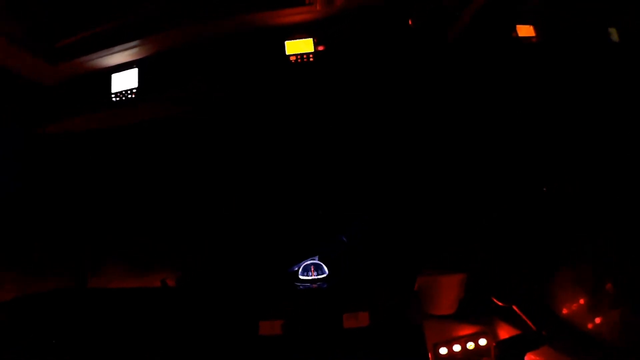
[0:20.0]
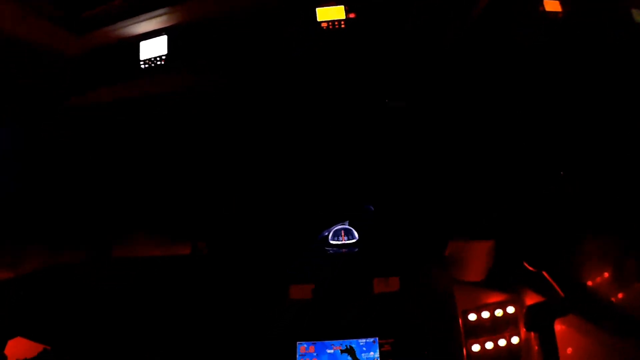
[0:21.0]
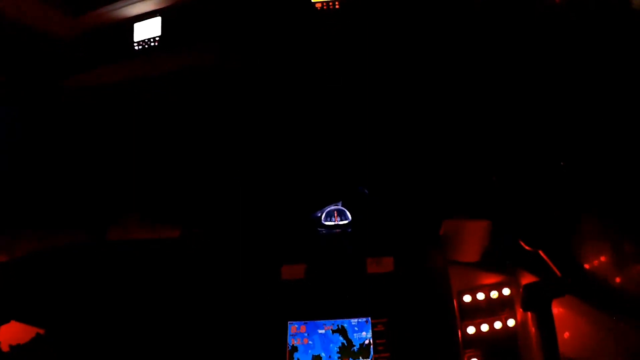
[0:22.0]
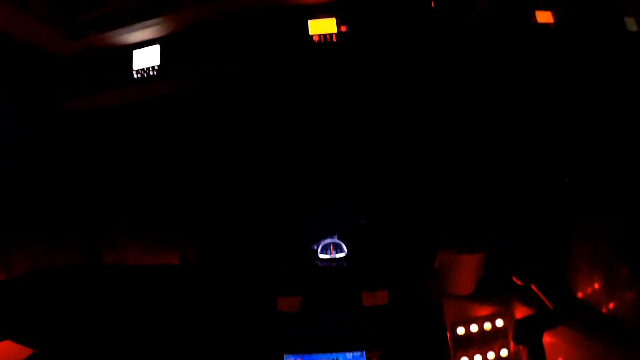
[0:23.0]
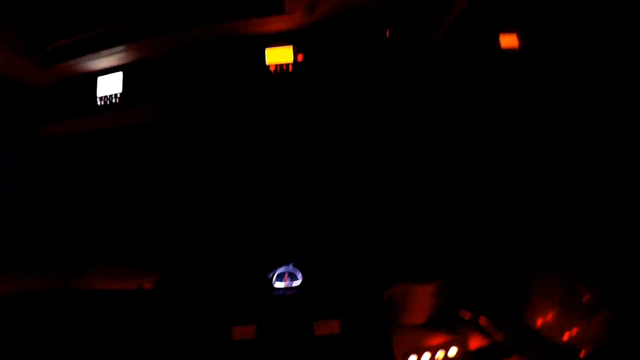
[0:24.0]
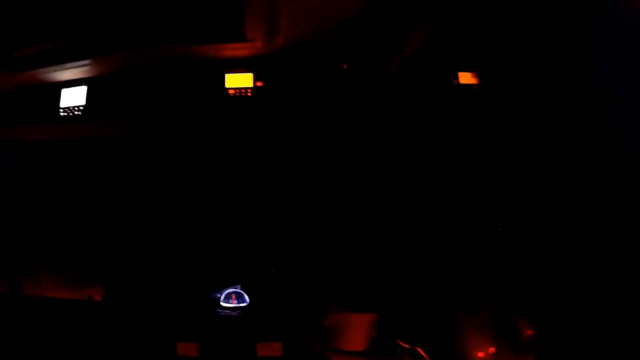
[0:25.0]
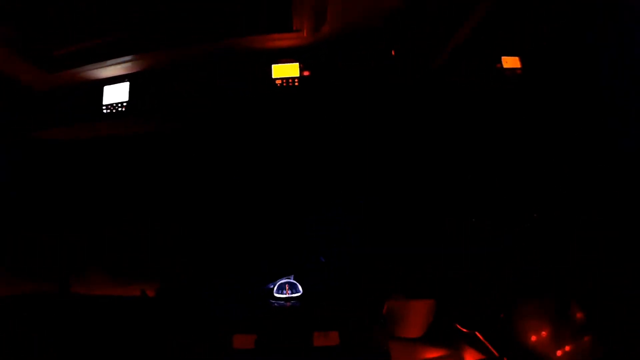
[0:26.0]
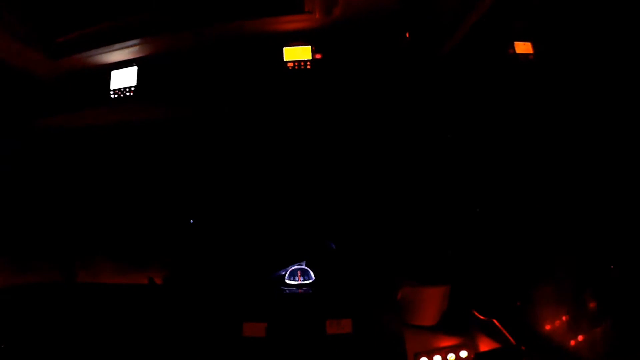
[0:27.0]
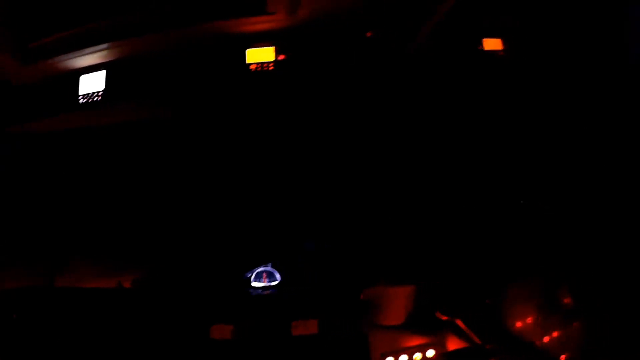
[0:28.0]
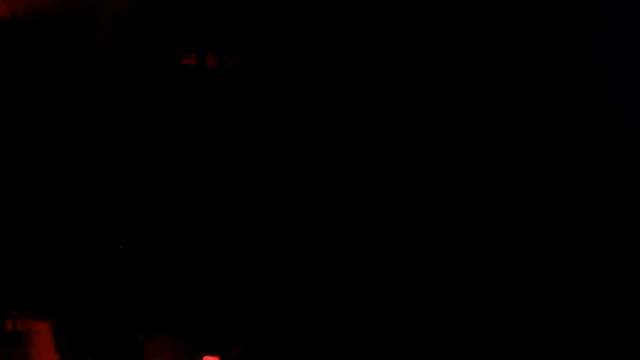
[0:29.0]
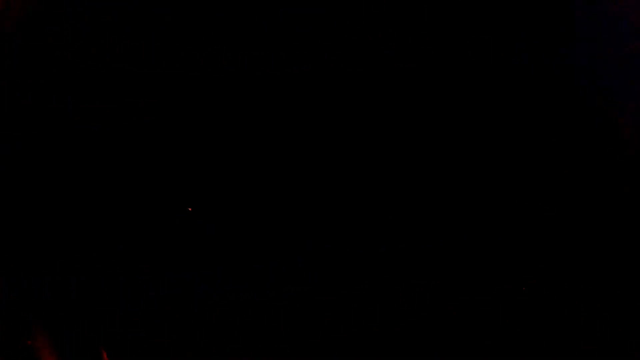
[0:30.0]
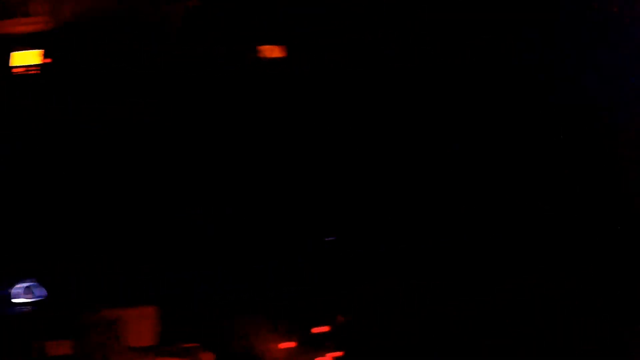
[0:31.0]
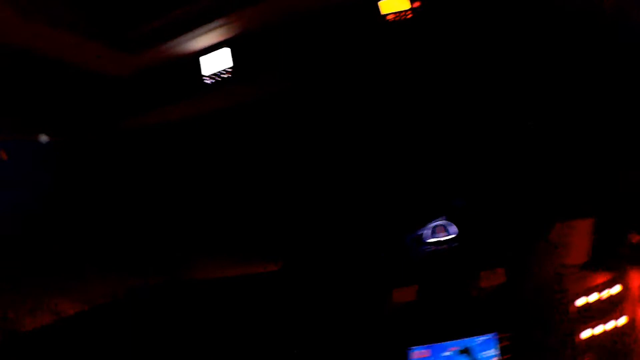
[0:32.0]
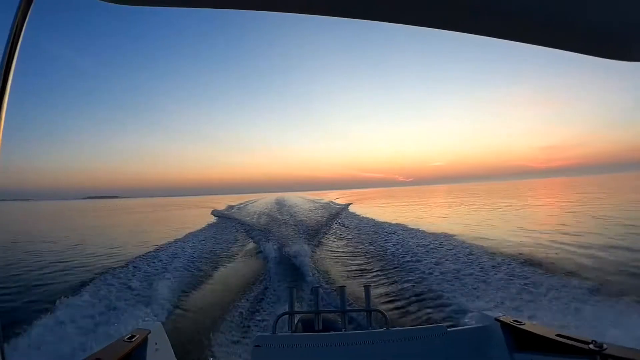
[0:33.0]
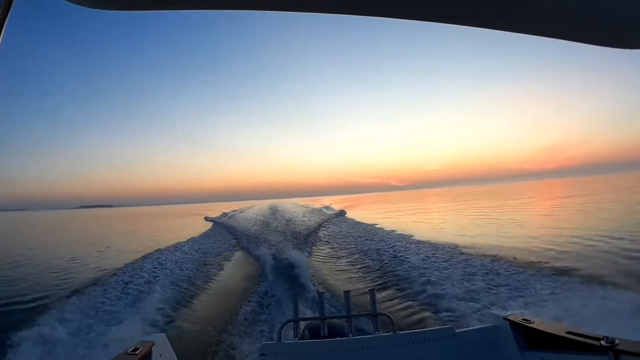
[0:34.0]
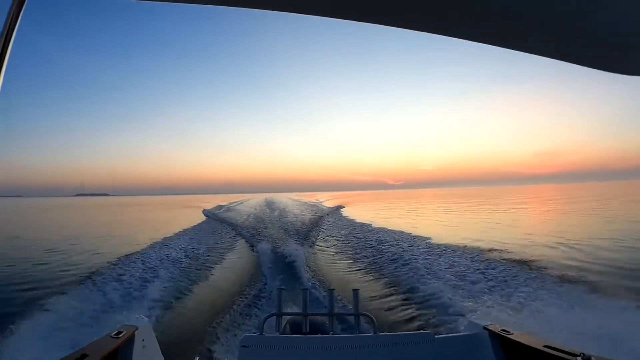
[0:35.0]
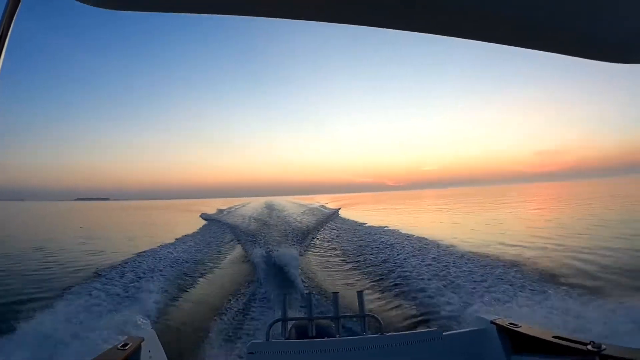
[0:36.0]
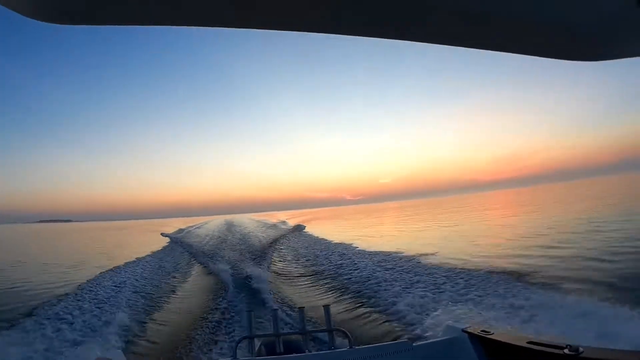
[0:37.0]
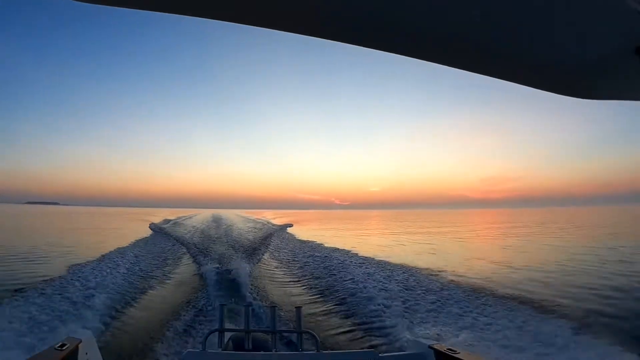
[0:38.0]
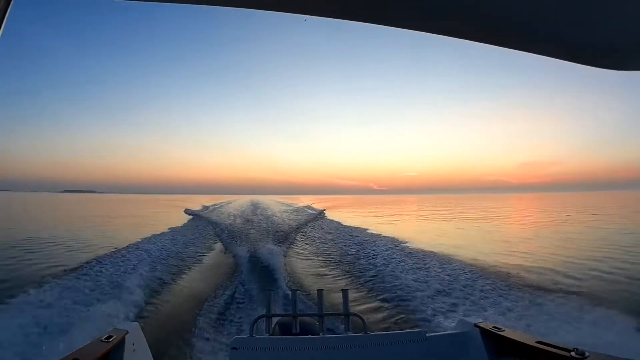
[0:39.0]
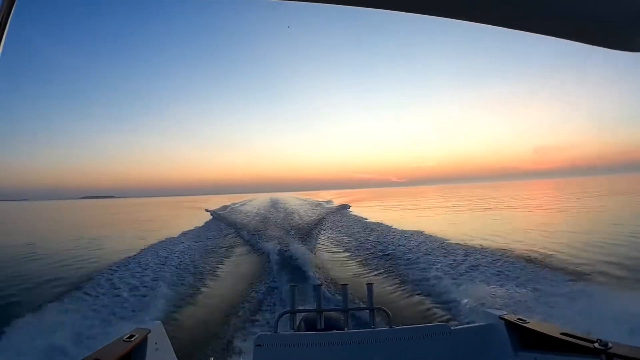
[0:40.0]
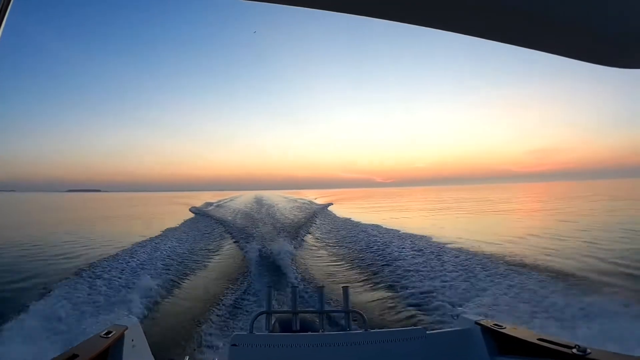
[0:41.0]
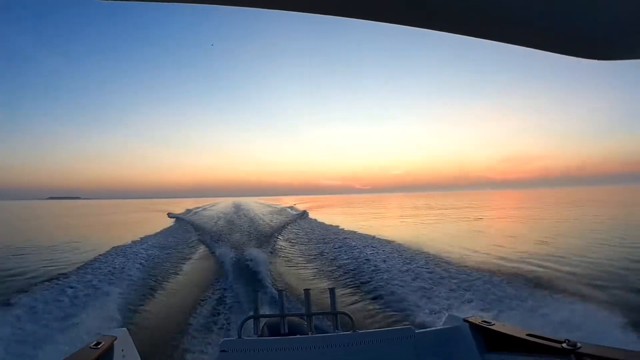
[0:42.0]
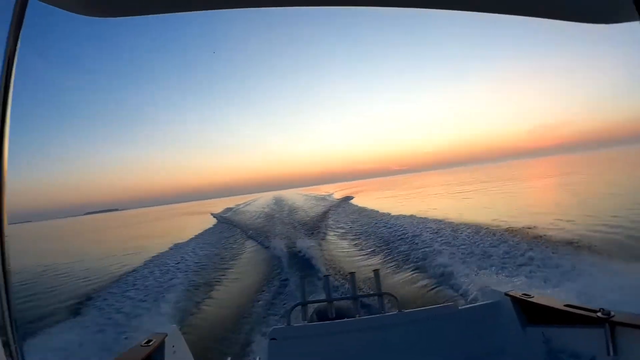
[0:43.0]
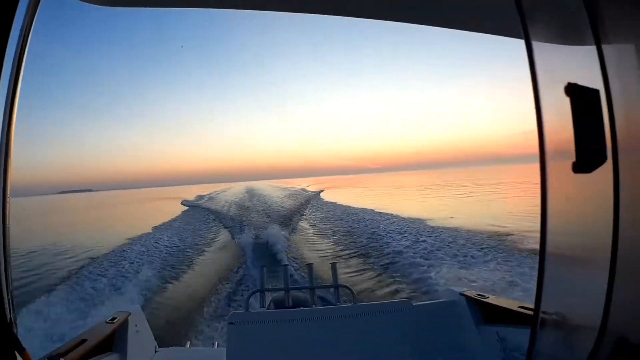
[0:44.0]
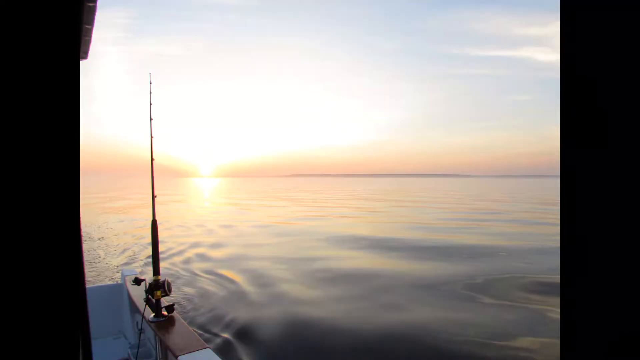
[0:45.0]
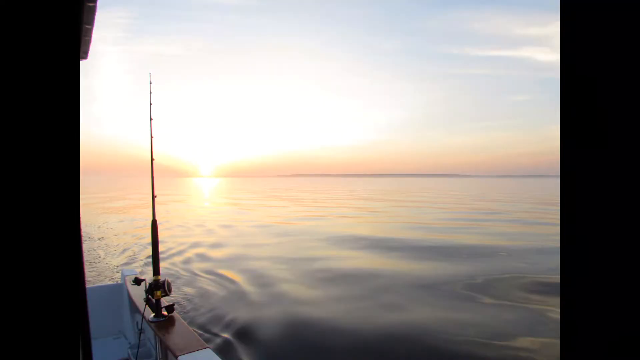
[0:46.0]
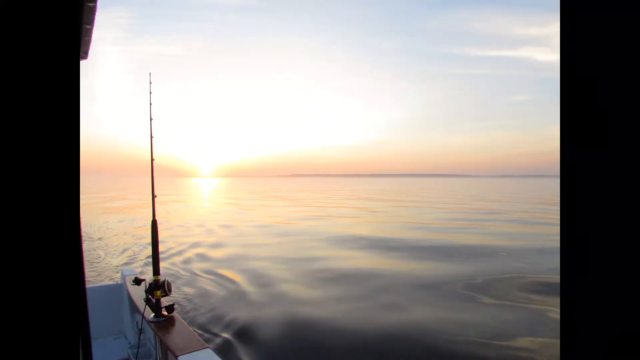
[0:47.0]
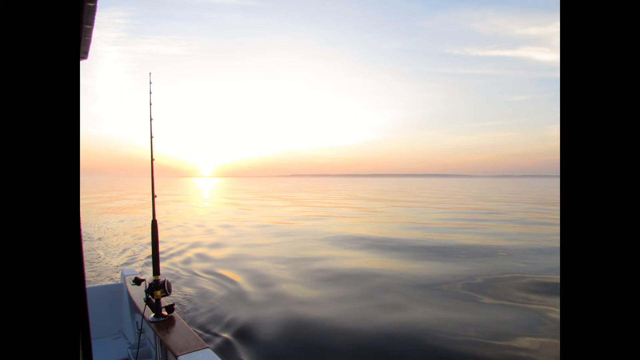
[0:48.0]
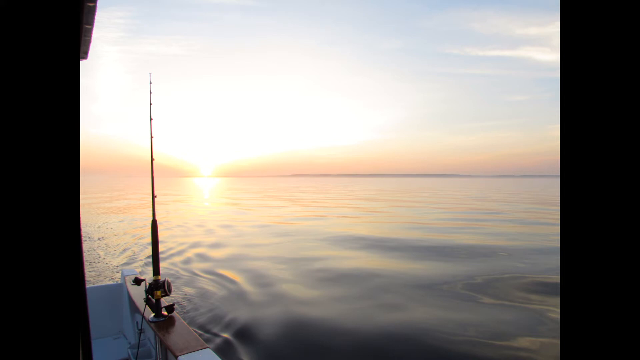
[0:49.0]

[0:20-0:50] The shot of very dark shapes continues. A white square shape is in the top left corner, a rectangular yellow shape with red around it is in the middle, and a rectangular orange shape is on the right. Different things glow at the very bottom. The camera pans to the right to a completely black screen, then back to the left. Next comes a shot from somebody recording while sitting in a boat, looking behind them as the boat moves through the ocean or lake. A little of the boat itself is visible, and what looks like nets or something are being pulled behind the boat to catch fish. This is followed by a still shot of what looks like a fishing pole, with the sun and the water in the background.